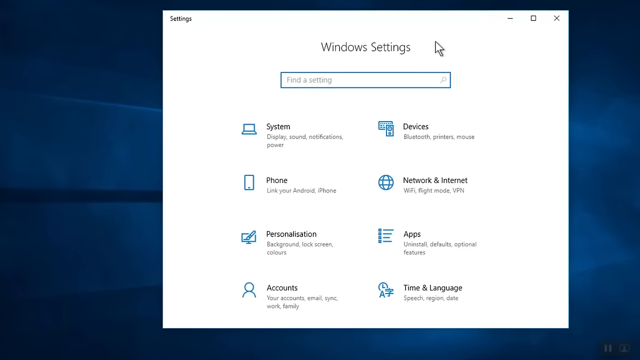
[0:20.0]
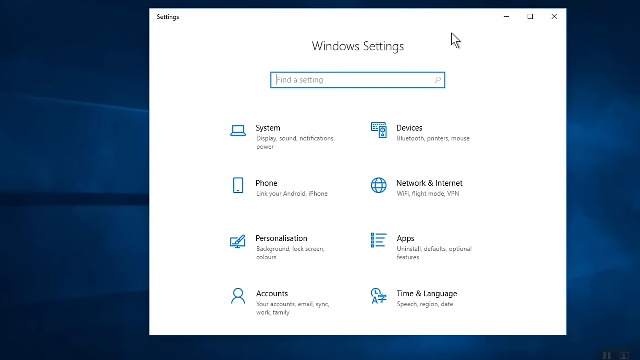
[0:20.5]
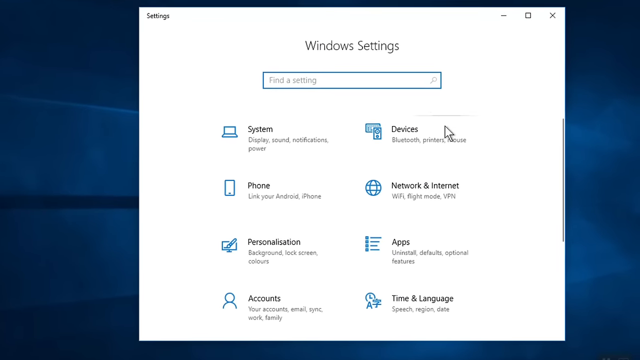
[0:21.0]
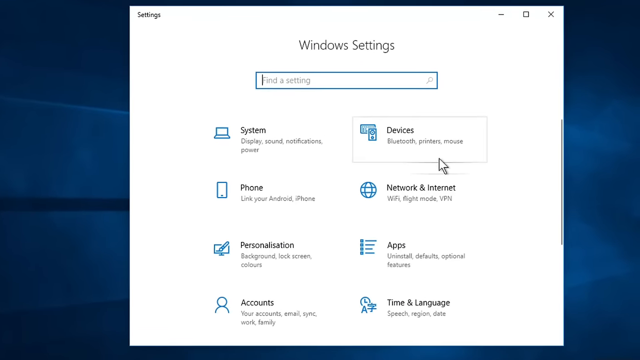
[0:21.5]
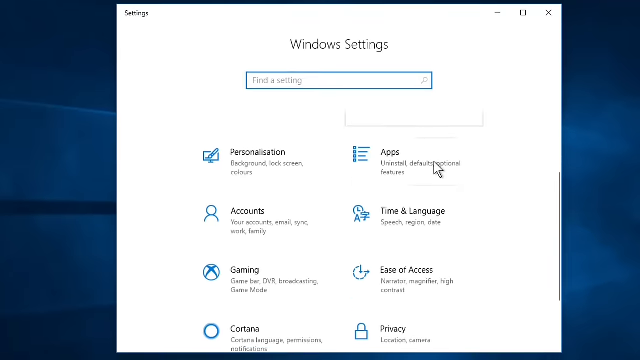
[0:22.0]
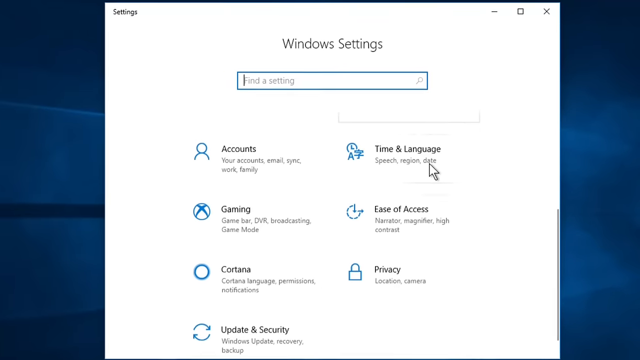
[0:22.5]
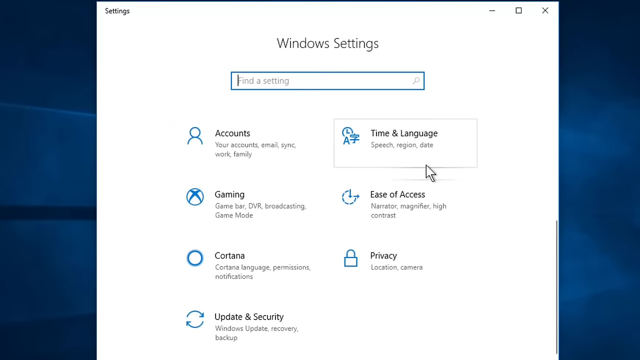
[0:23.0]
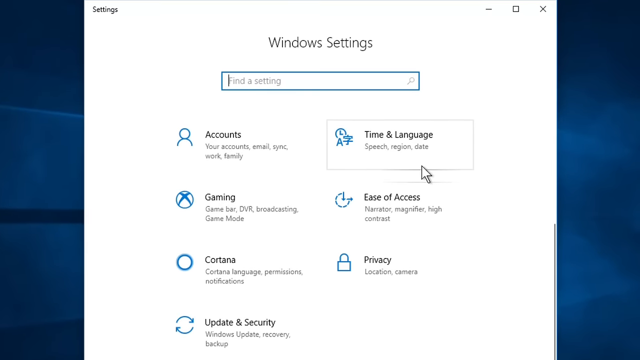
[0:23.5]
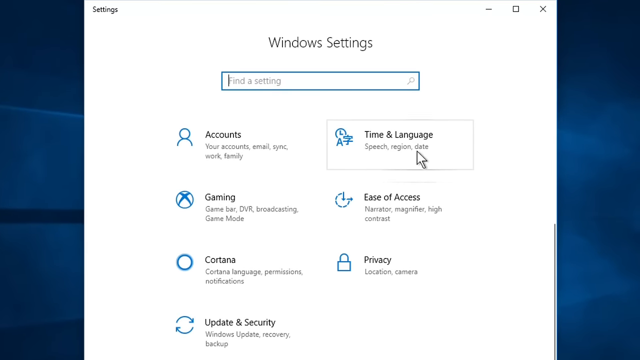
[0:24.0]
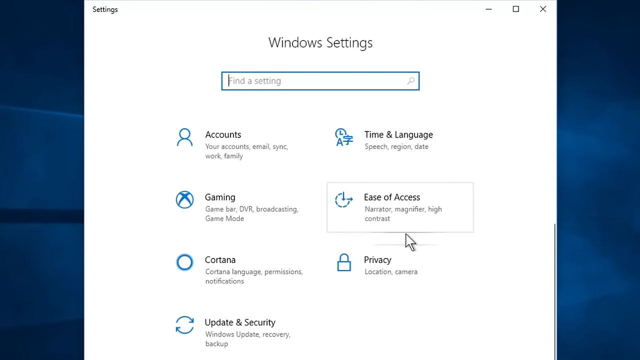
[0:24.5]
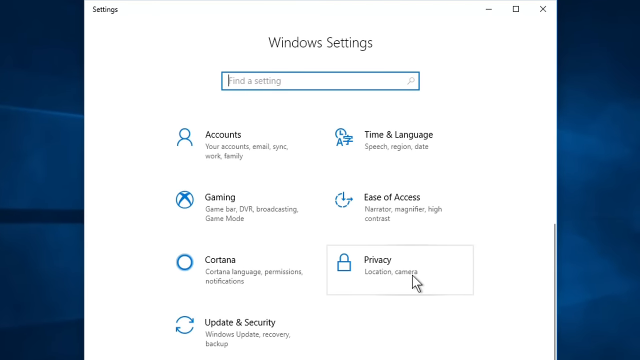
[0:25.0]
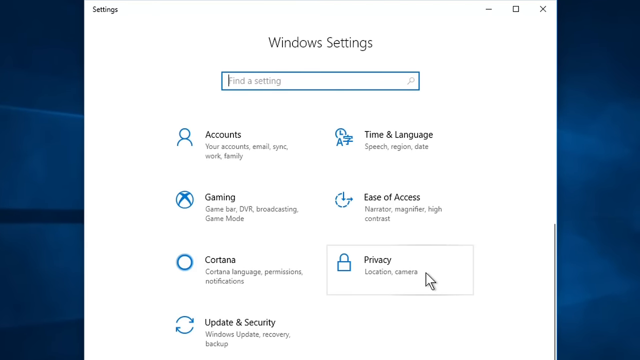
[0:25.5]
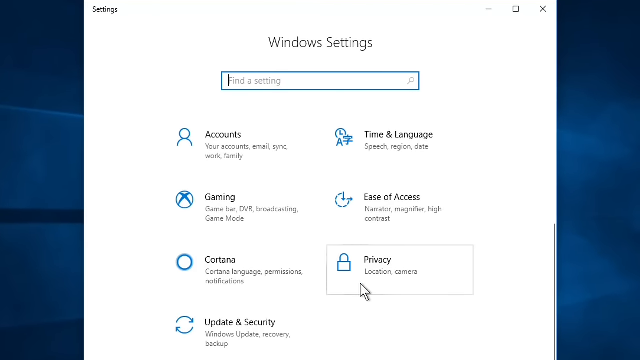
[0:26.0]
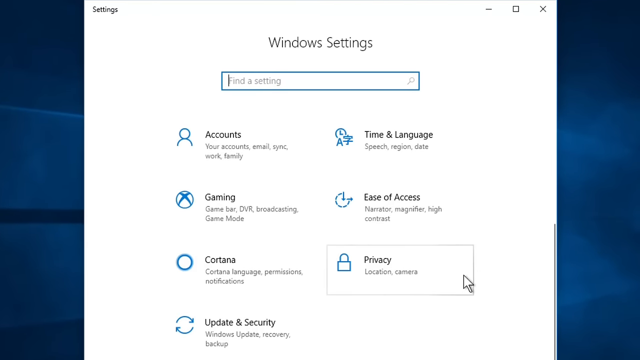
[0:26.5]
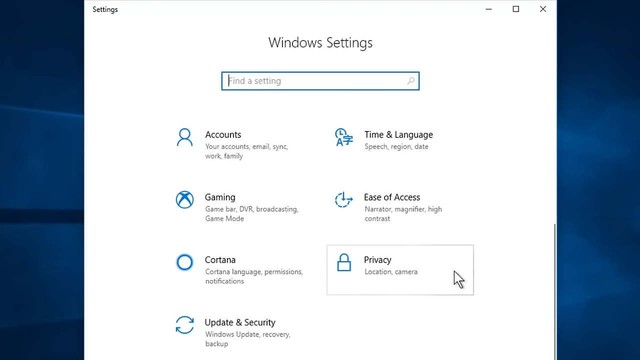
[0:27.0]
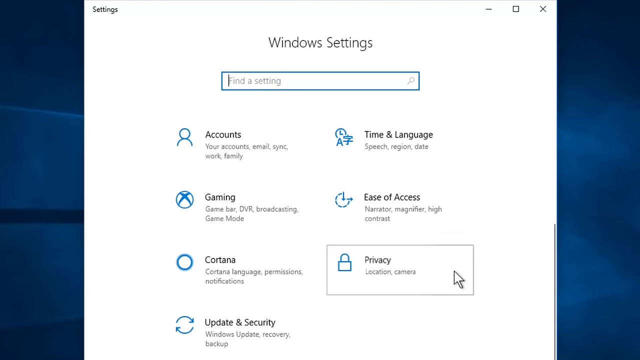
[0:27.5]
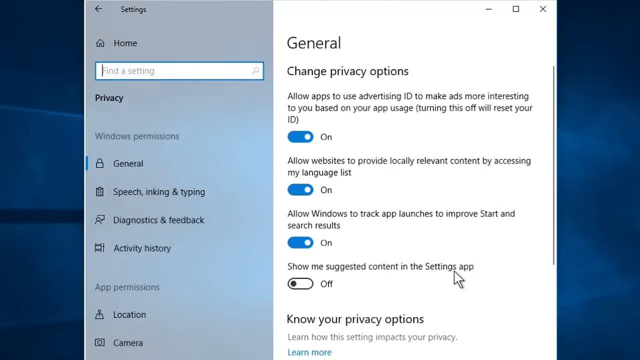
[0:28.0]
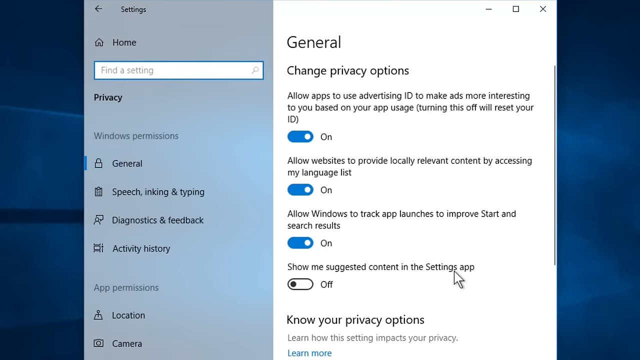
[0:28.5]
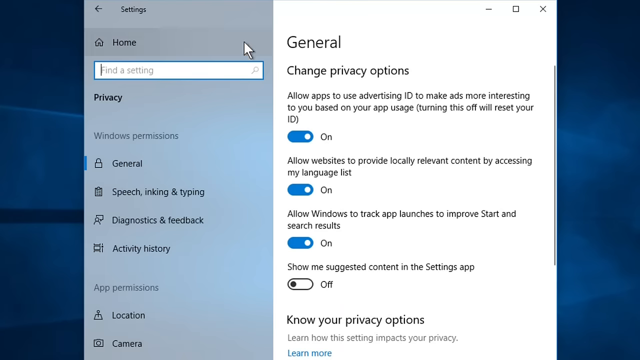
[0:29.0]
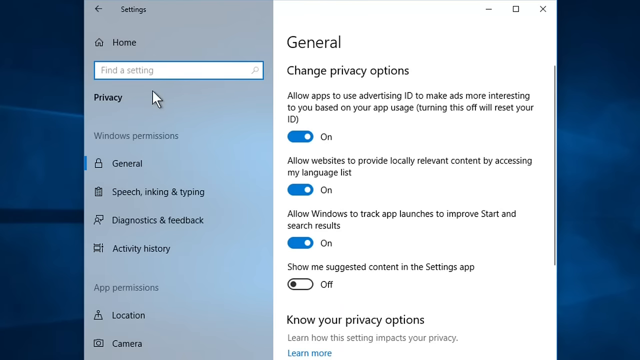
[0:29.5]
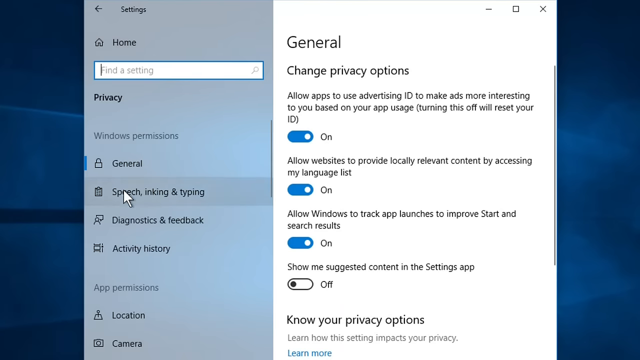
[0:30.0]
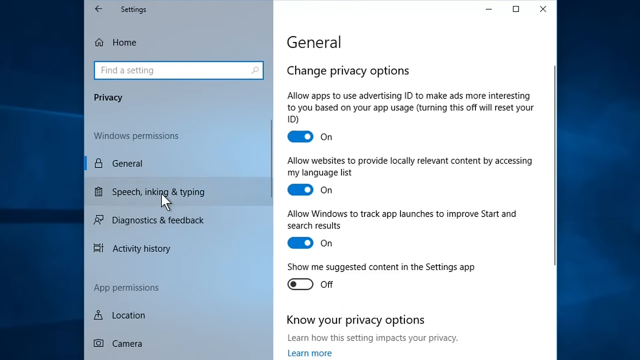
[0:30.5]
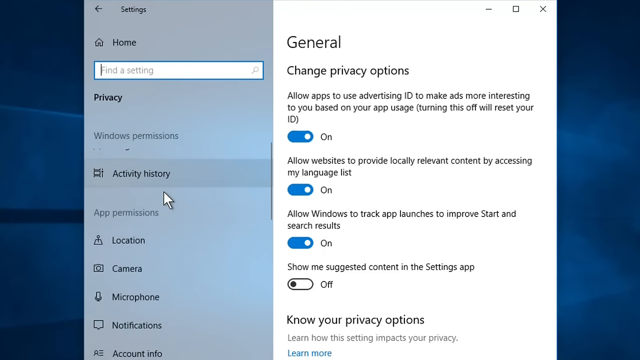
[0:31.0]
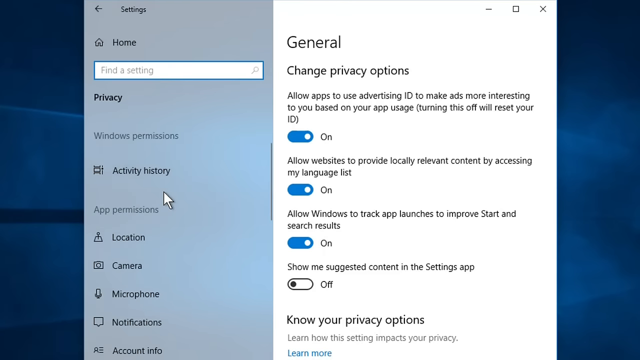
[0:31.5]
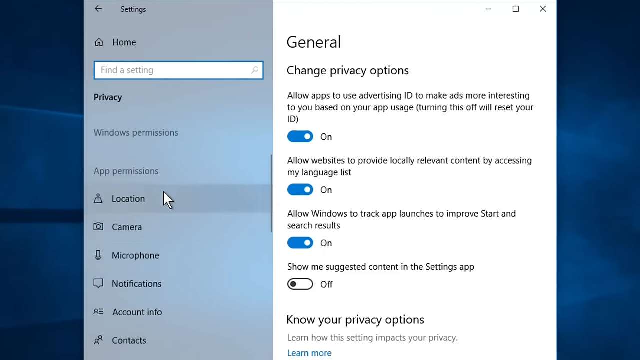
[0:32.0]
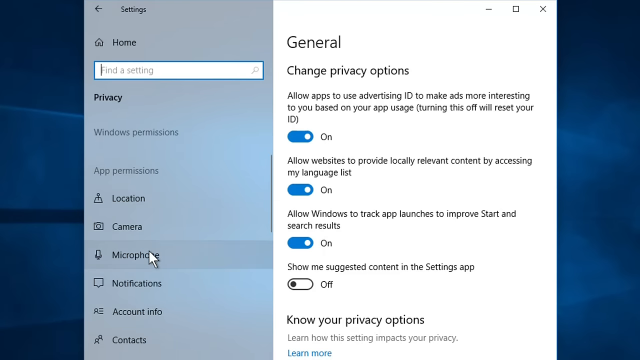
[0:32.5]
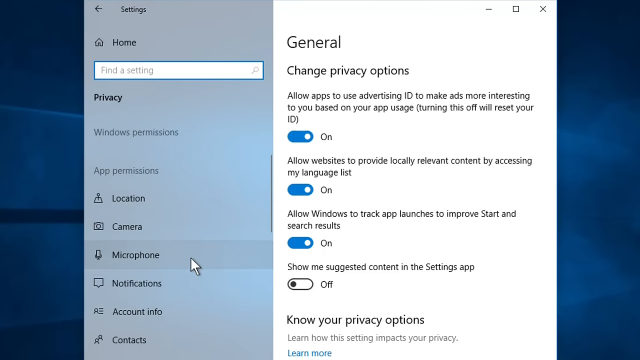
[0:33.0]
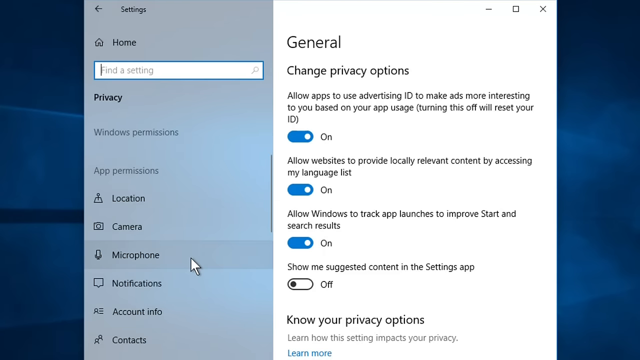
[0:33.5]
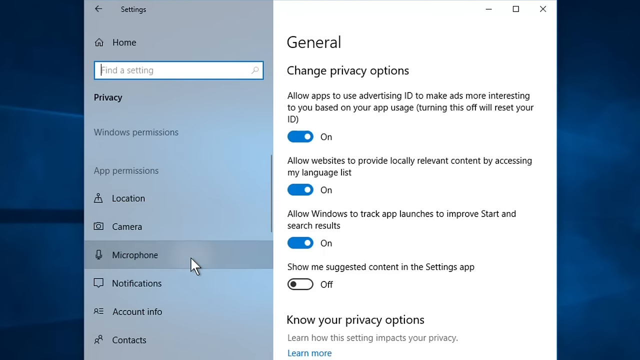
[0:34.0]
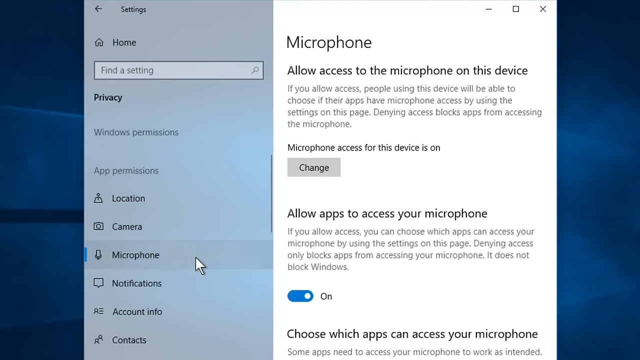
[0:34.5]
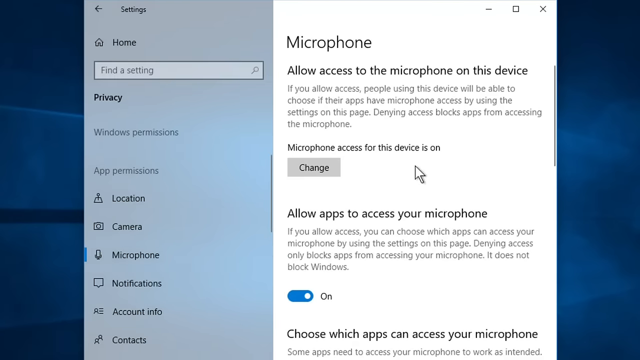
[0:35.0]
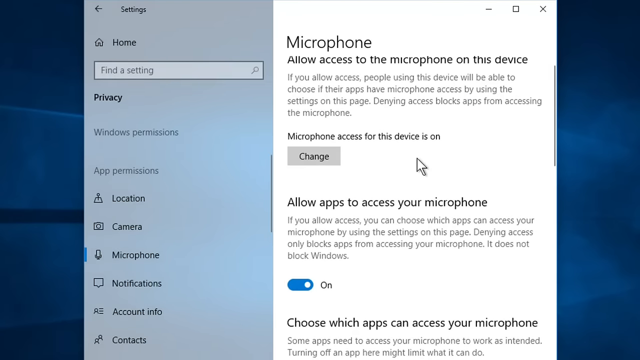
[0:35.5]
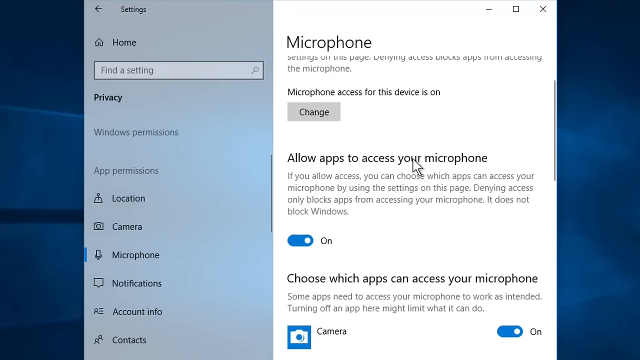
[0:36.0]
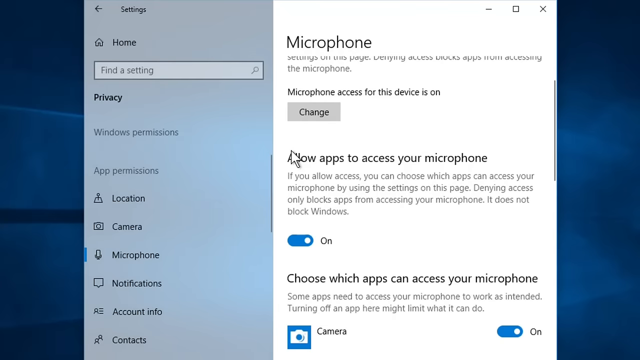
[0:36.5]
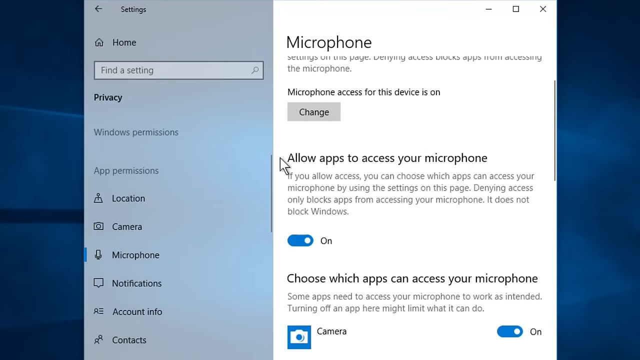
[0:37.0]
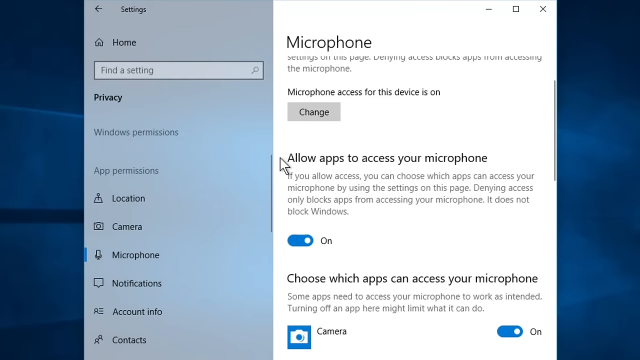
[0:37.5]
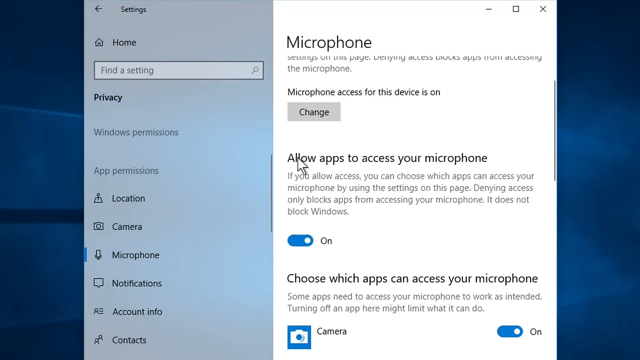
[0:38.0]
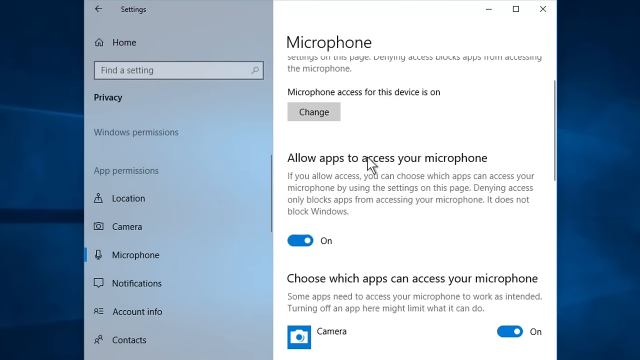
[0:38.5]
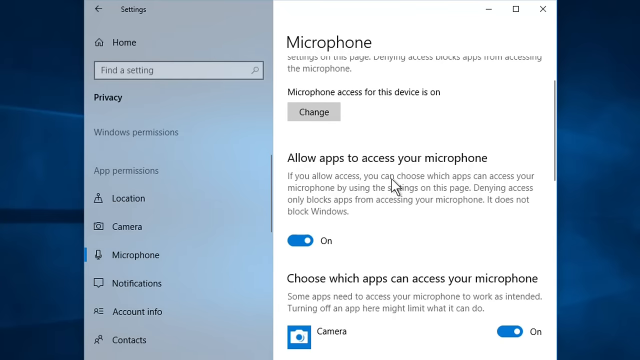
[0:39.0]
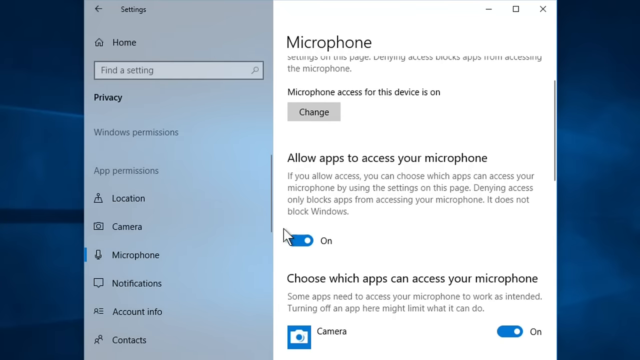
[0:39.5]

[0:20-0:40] The view zooms in slightly on the Windows Settings screen so that it takes up most of the computer screen. The person scrolls down with the cursor, revealing more entries below, and finally clicks a rectangular box that says "Privacy" along with some other words. This opens another screen: on the left is a kind of grayish blue panel with a list of words, and on the larger right part it says "General" at the top and "Change Privacy Options" beneath it. The person goes to the left panel and scrolls upward, the words moving up, then clicks Microphone; the right panel now says "Microphone" at the top, with a lot of words below. The cursor moves slowly around a section that says "Allow apps to access your microphone", which has about three and a half lines of text with an "On" marker below it, set to On. The cursor kind of circles around it a little as though it is going to click it.